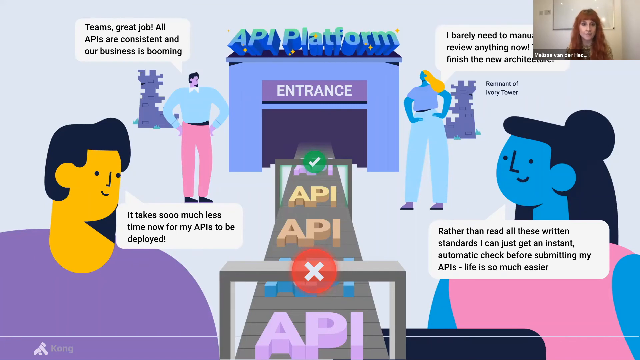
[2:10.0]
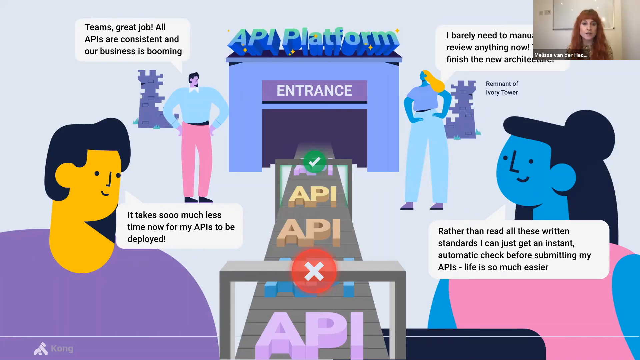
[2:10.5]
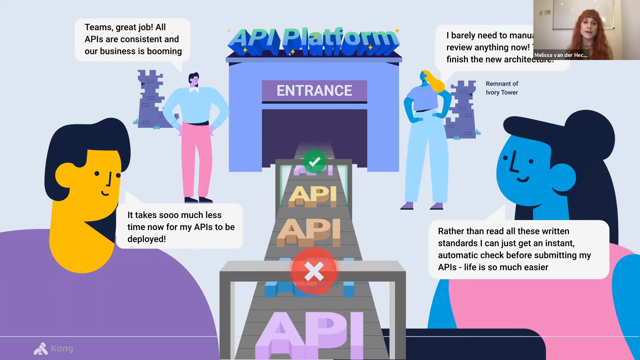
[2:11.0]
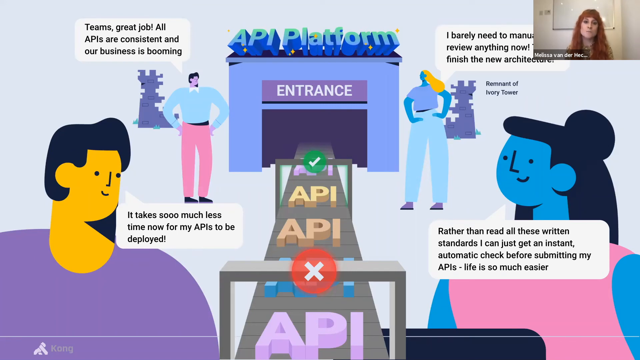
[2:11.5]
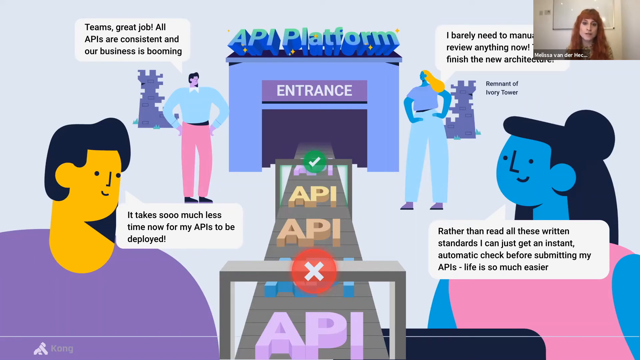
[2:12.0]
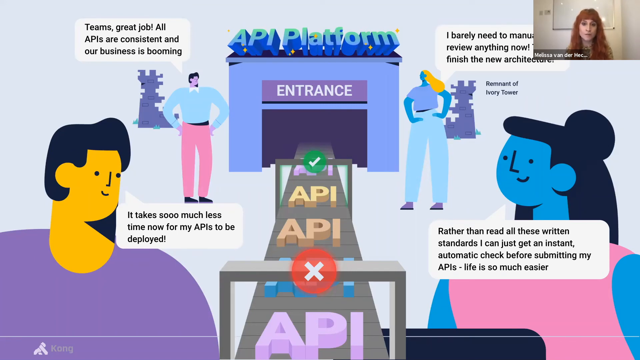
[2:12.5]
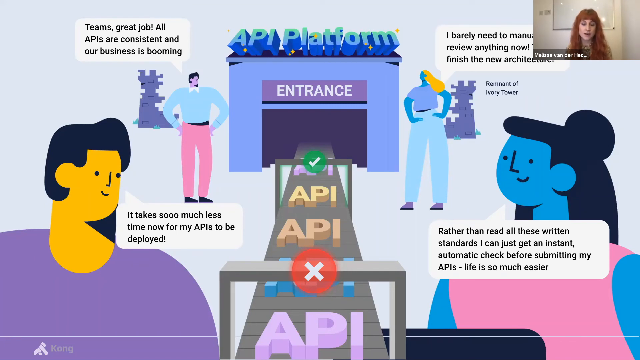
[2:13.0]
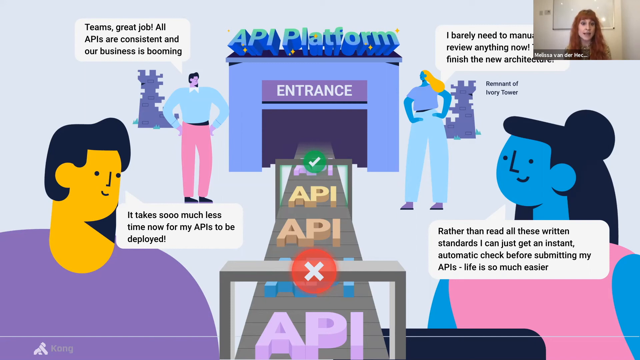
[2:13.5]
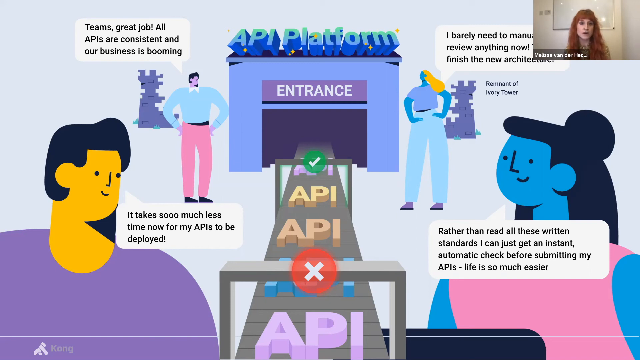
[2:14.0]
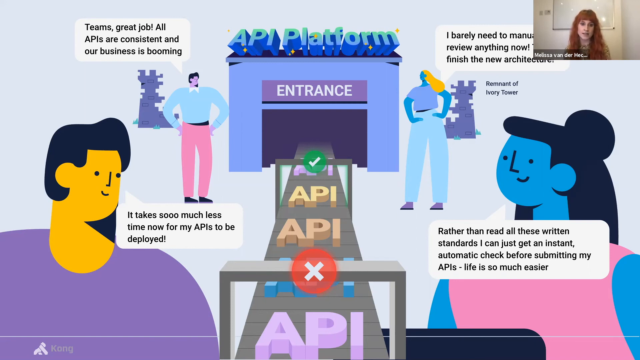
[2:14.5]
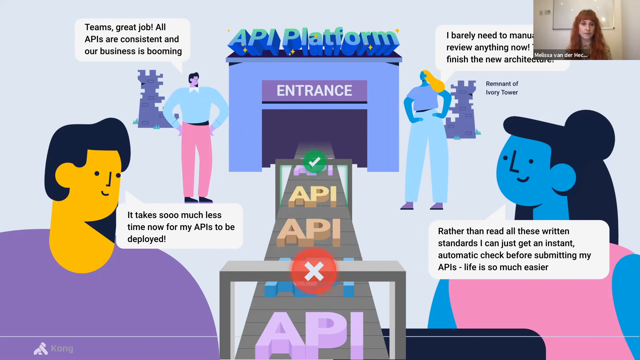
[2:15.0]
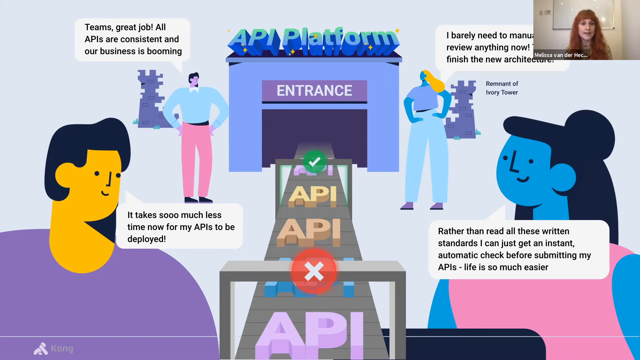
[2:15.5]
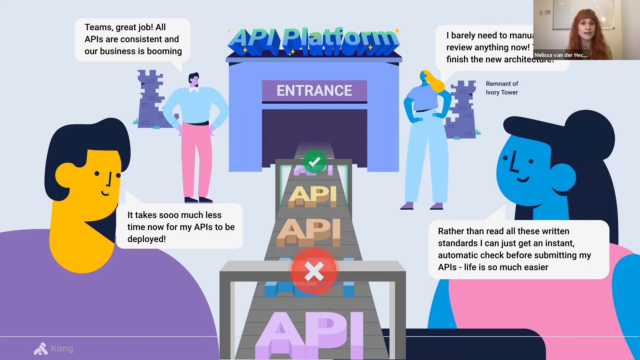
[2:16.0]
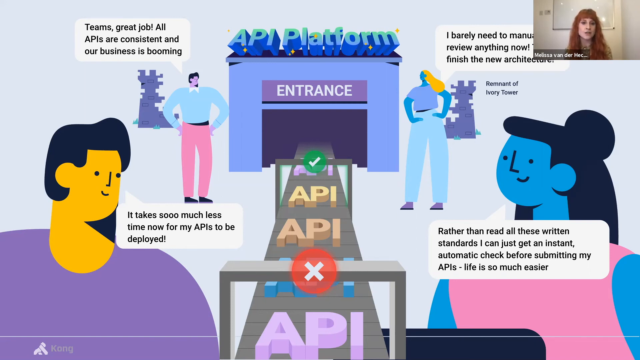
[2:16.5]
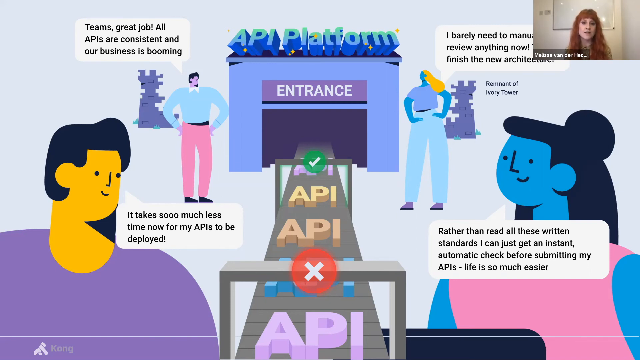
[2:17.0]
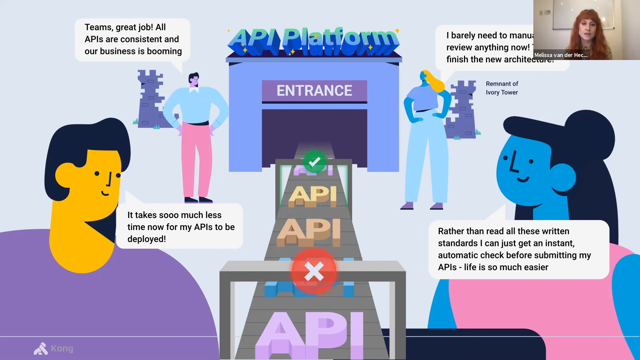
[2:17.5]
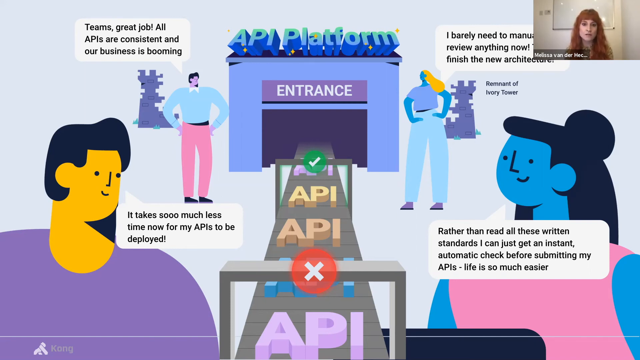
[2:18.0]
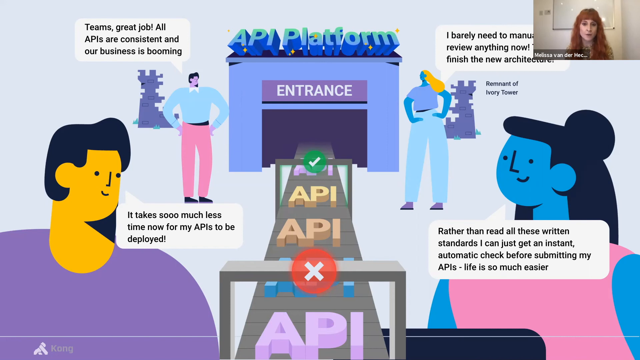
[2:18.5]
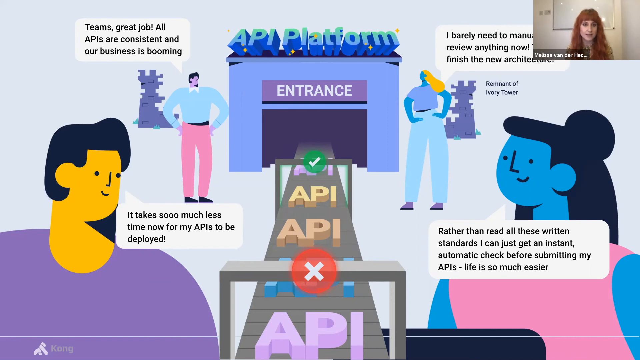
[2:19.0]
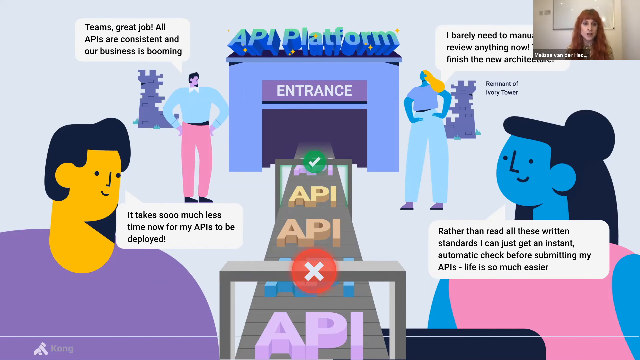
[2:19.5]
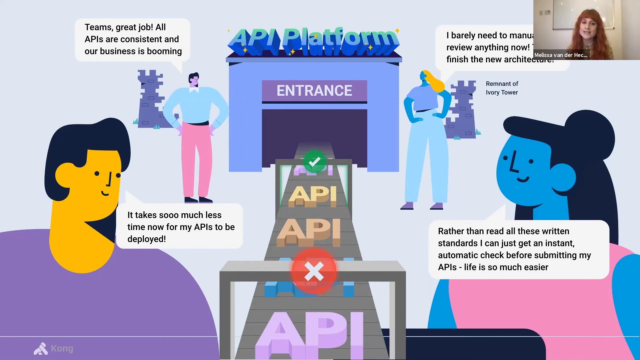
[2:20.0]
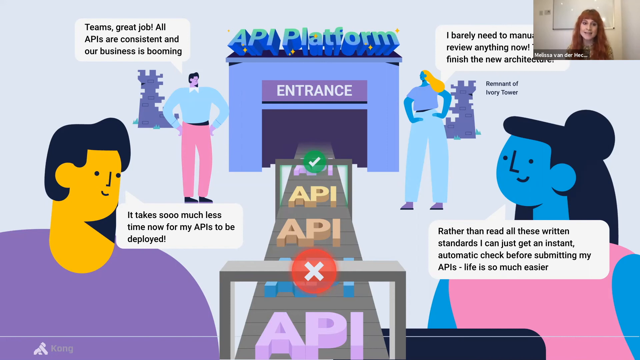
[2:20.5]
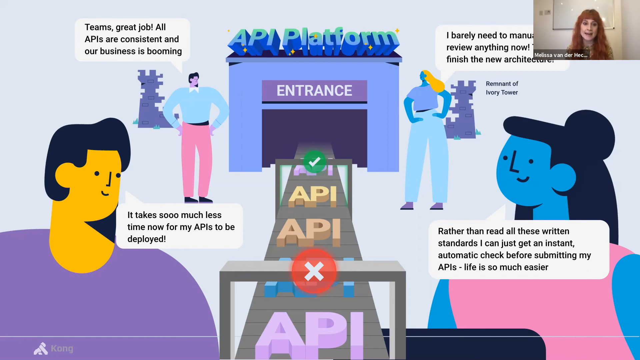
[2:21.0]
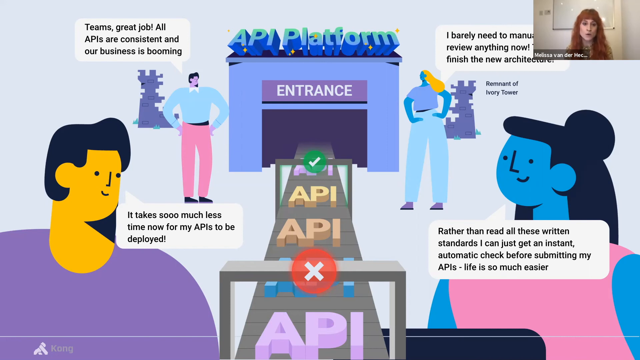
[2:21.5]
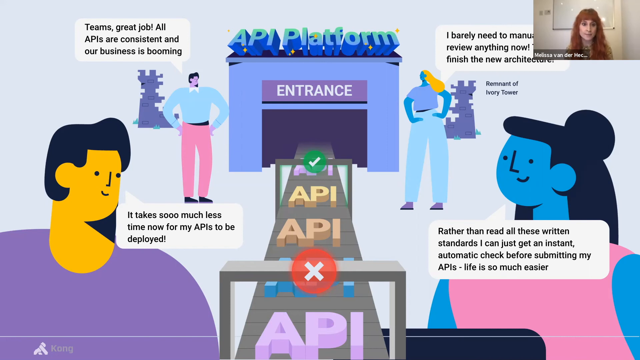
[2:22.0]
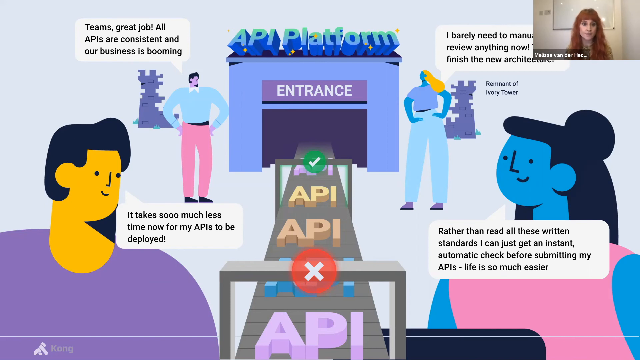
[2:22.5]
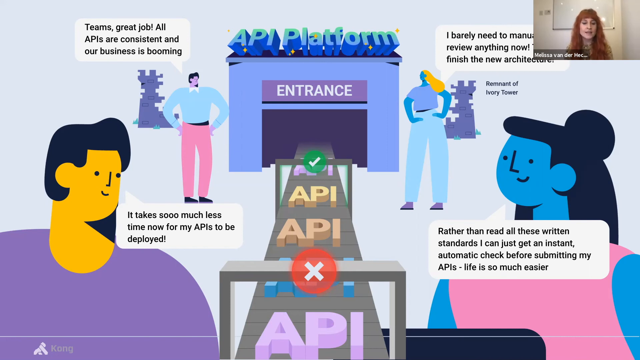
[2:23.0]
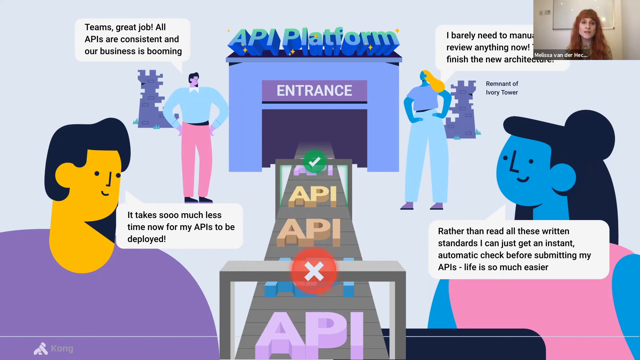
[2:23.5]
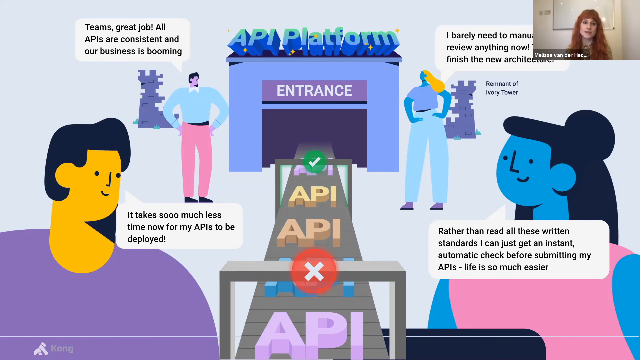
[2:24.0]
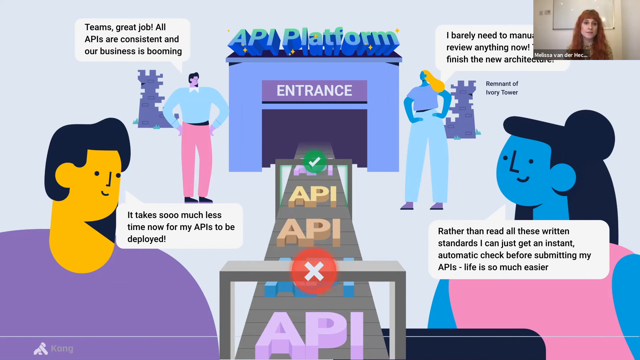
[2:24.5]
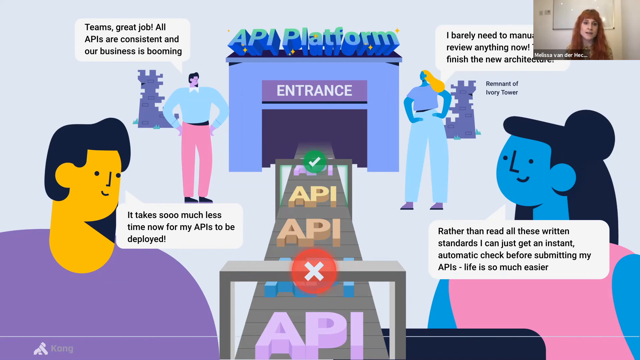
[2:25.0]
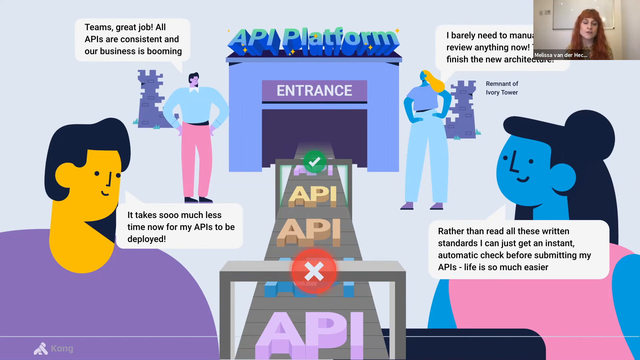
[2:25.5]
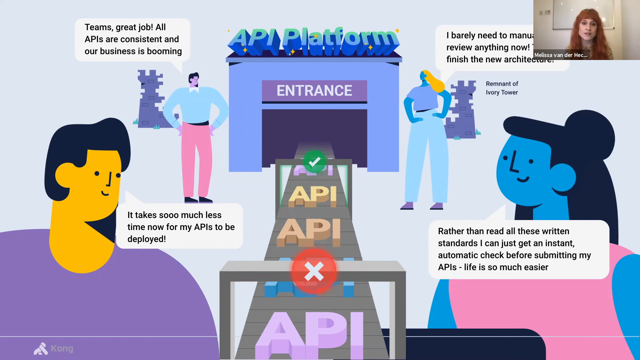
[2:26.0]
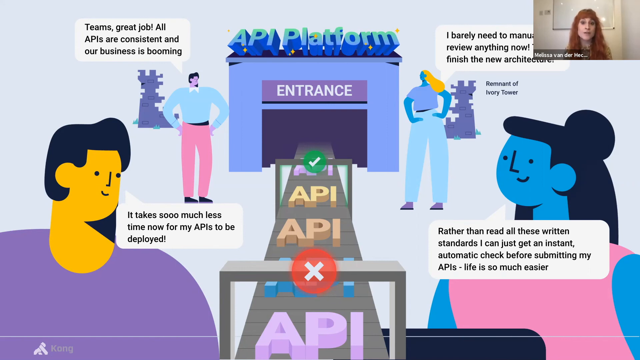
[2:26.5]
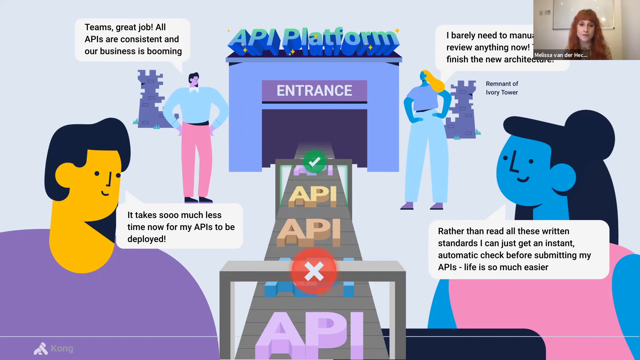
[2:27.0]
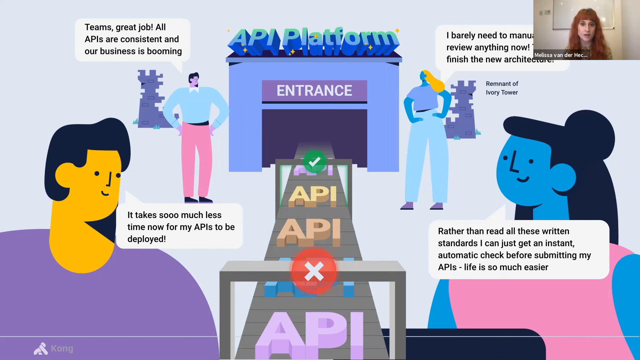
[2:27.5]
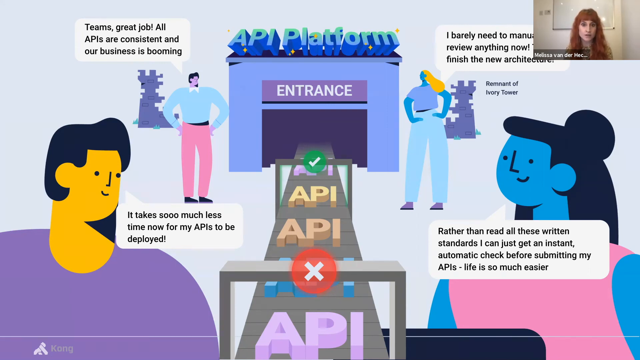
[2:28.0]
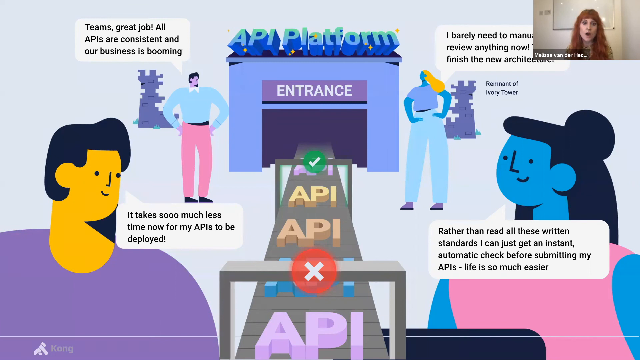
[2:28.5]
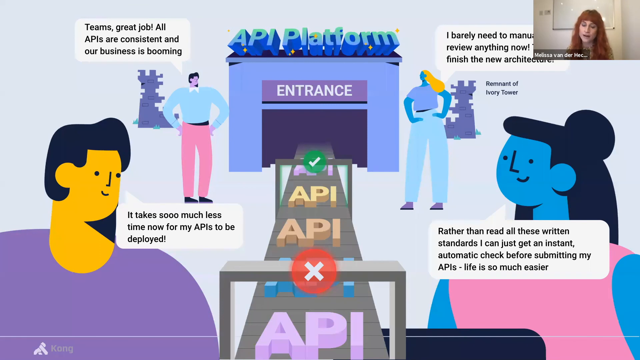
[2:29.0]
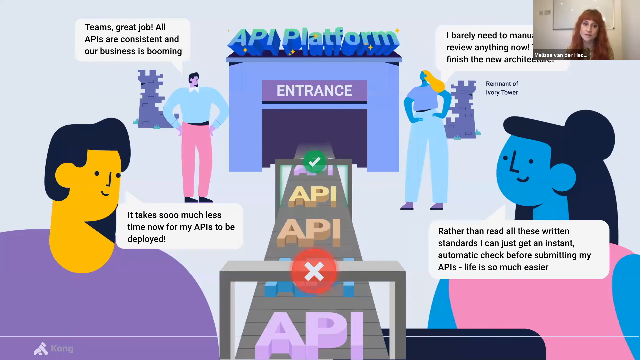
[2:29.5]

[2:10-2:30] A PowerPoint slide takes up most of the screen, with video in the top right-hand corner of a woman who is speaking and seems to be presenting it. Nothing much changes; the slide, which consists mostly of vector drawings of people, each with a speech bubble discussing APIs, stays exactly the same with no movement. The only movement is the woman's mouth and head as she speaks. She seems to be a relatively quick and animated speaker, with no particular change in her cadence. Her torso moves a little within the frame, and she seems to open her mouth pretty widely, but she does not move her hands at all. Her shoulders stay still, and her hands and arms are outside the frame.